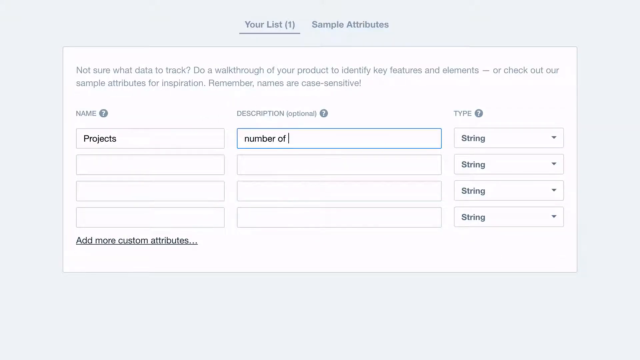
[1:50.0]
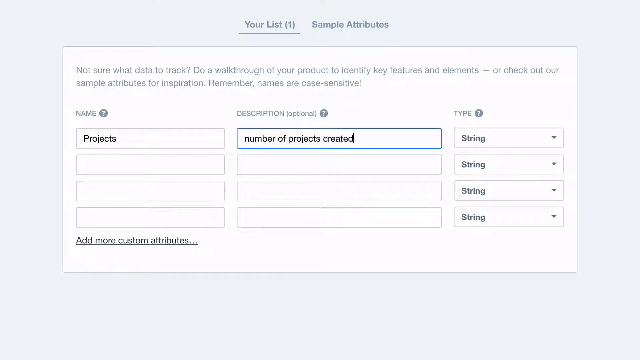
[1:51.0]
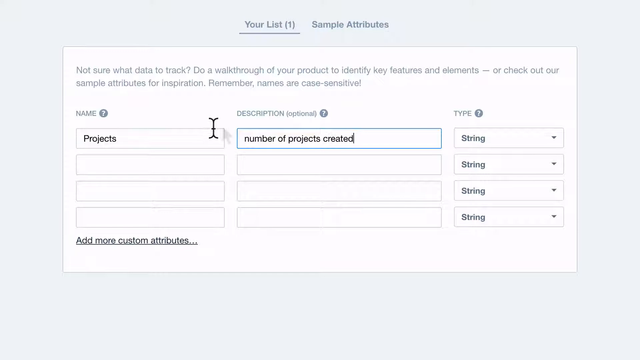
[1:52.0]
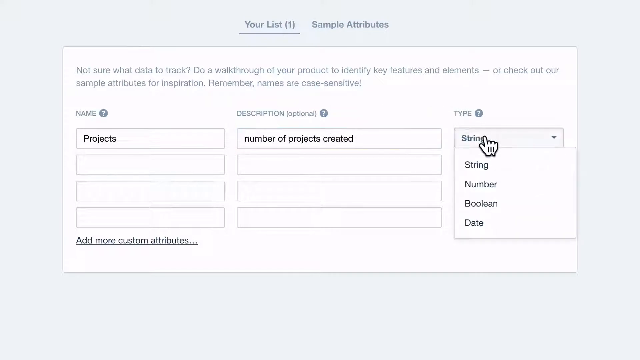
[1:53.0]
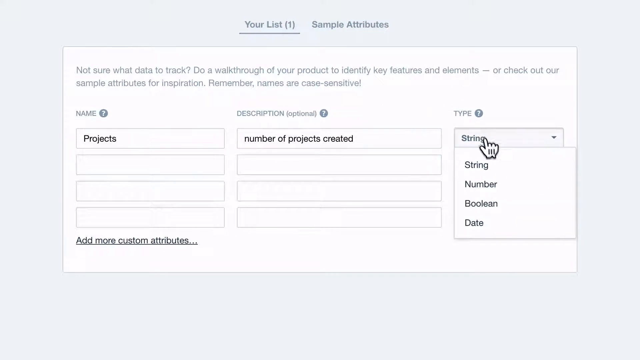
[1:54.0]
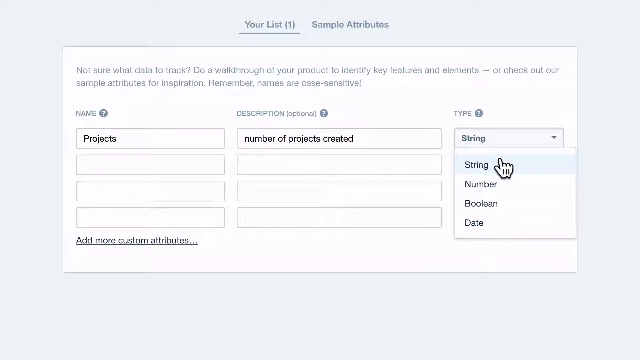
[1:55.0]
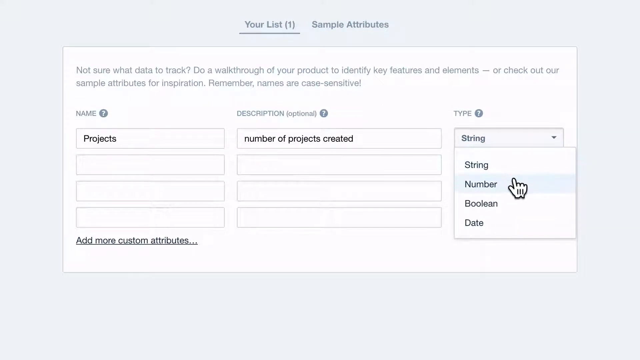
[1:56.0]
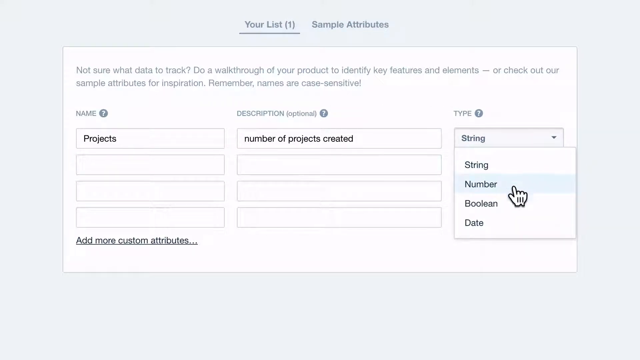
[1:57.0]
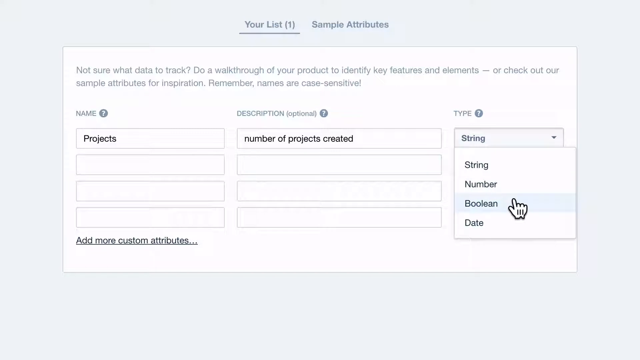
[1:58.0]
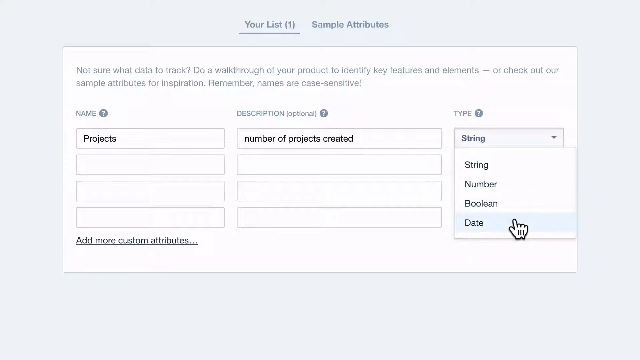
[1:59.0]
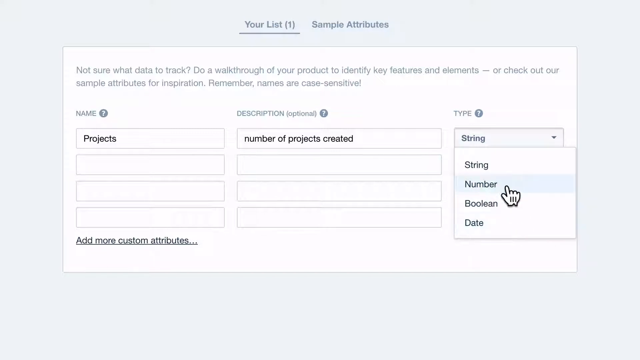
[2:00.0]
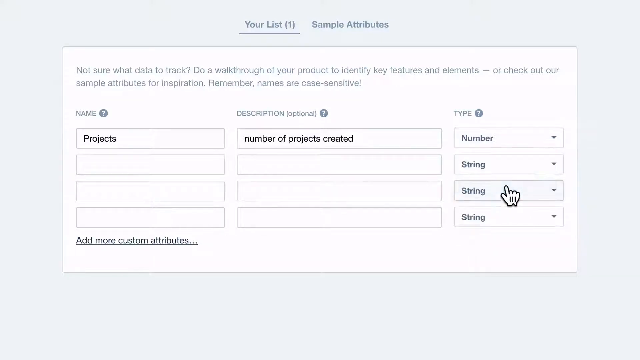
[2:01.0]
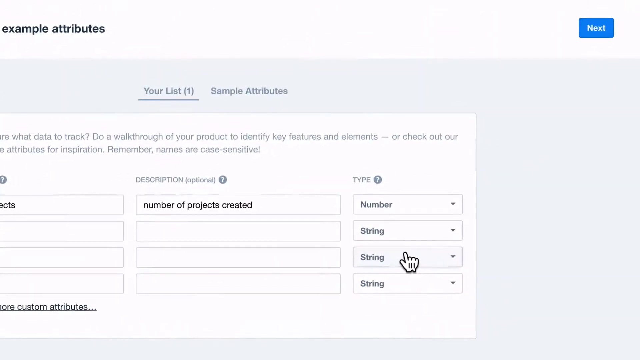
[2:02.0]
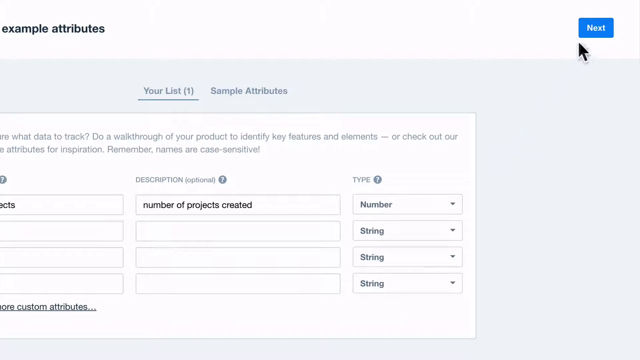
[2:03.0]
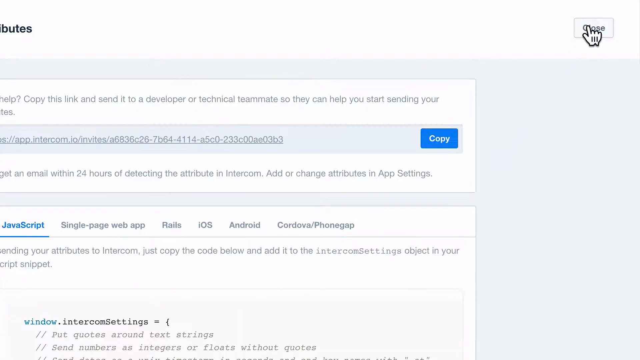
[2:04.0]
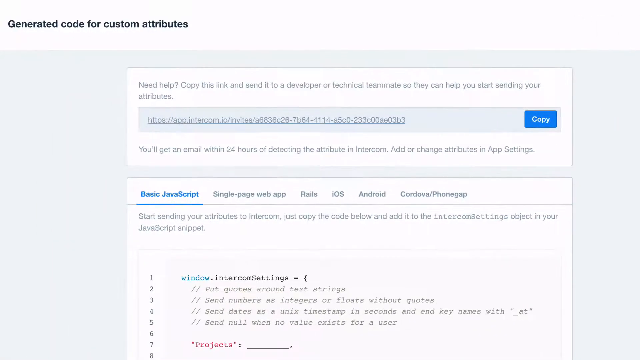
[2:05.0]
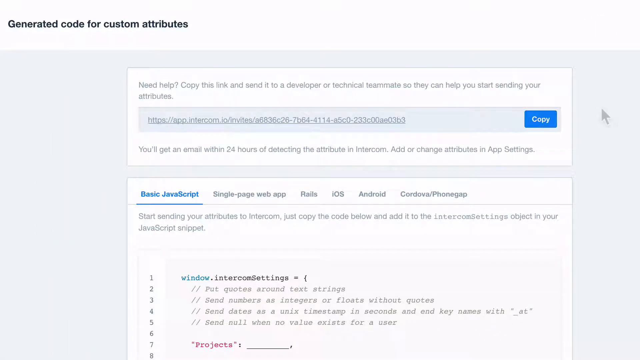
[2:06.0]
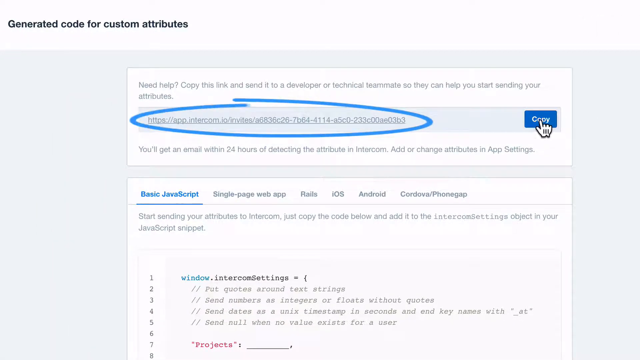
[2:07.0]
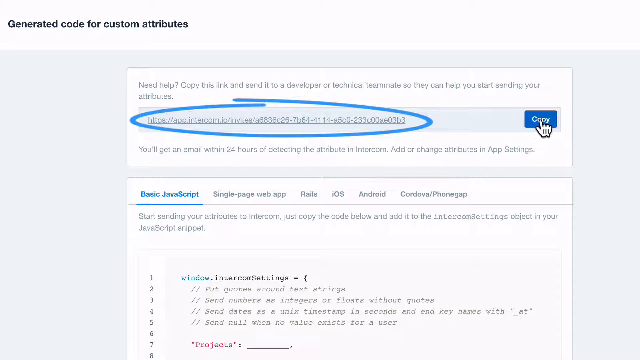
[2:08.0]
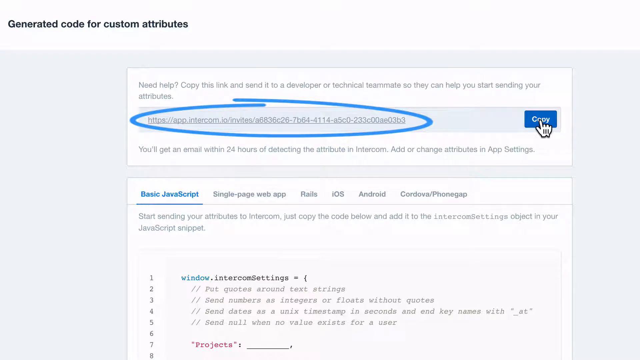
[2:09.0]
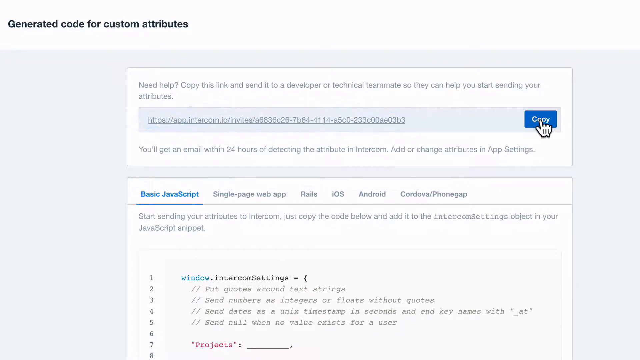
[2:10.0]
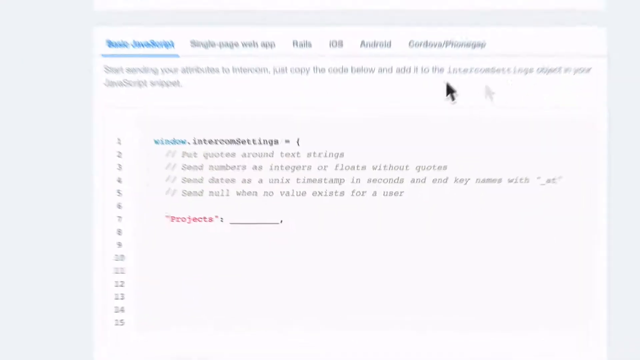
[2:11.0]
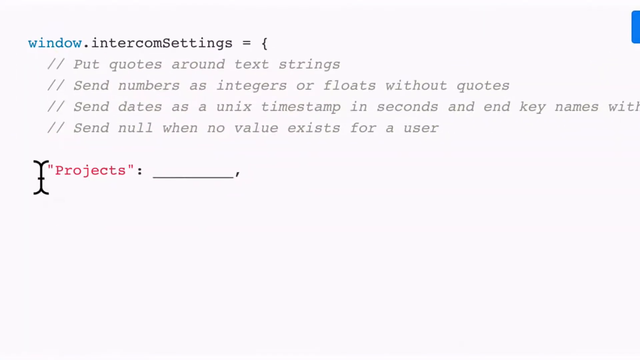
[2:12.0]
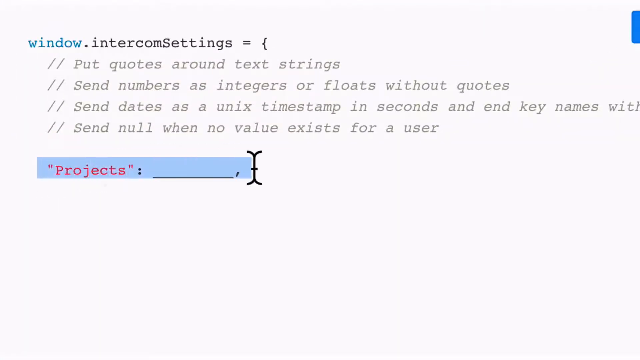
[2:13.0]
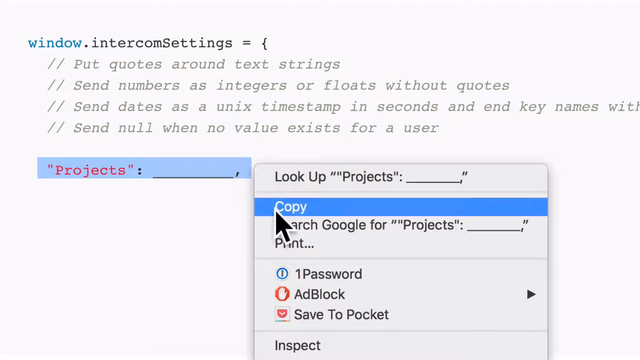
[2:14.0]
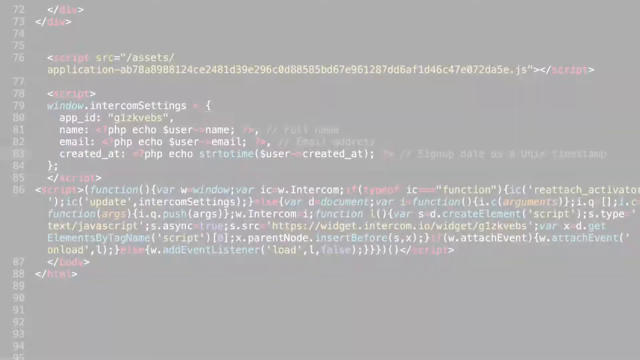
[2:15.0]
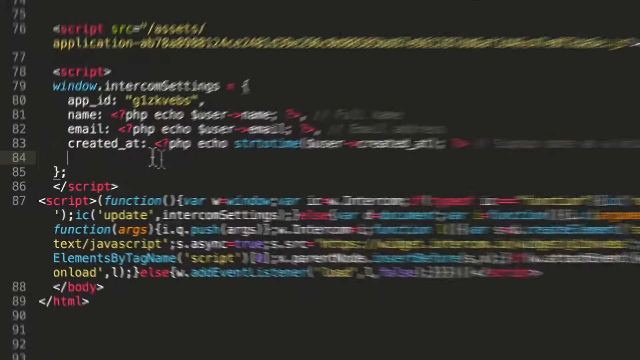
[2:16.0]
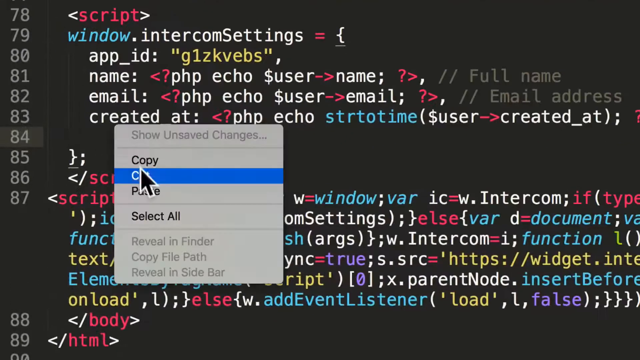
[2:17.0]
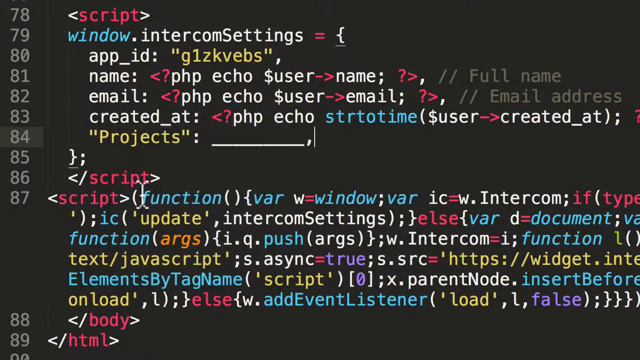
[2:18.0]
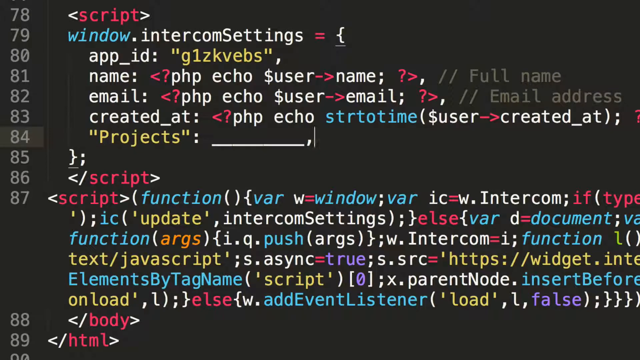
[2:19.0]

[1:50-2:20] A horizontal rectangle box says "your list," with "sample attributes" behind it, and the text "not sure what data to track. Do a walkthrough of your product to identify key features and elements. Or check out our sample attributes for inspiration. Remember, names are case sensitive." There are three columns. The first says "name," with a question mark and a blue circle, and underneath it are four rectangle boxes that can be typed in, the first saying "projects." To the right, the larger middle column says "description, optional," with a blue circle and a white question mark, and also has four boxes that can be typed in; the words in there read "a number of," and the third box is "string." They are drop-down boxes. Below, it says "add more custom attributes as you go along." The cursor changes from an arrow to a hand, moves up to the top right and hits the word "save." The screen goes back to where it was. It hits copy, highlights the word "projects," and saves. In the next section it pastes on line 84, with multiple colors on the lines while pasting, and then returns to the original screen.